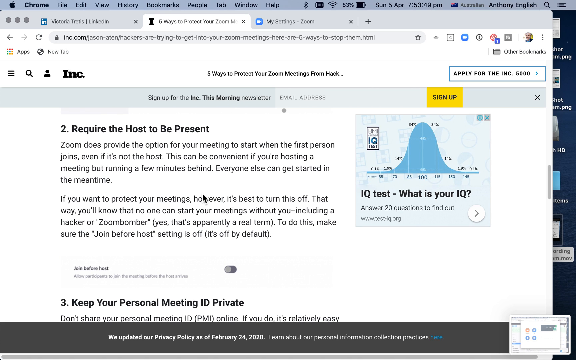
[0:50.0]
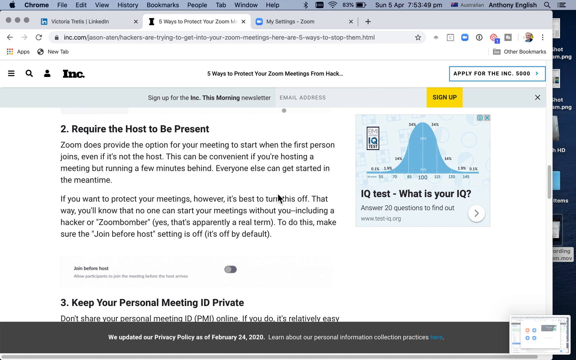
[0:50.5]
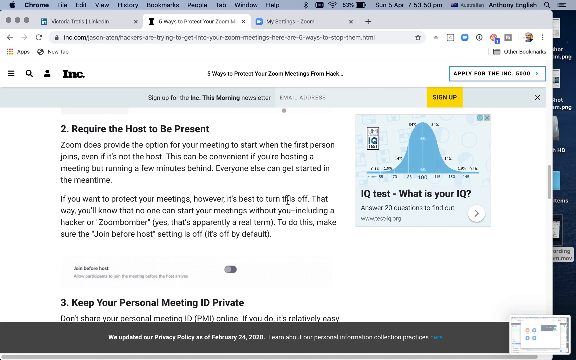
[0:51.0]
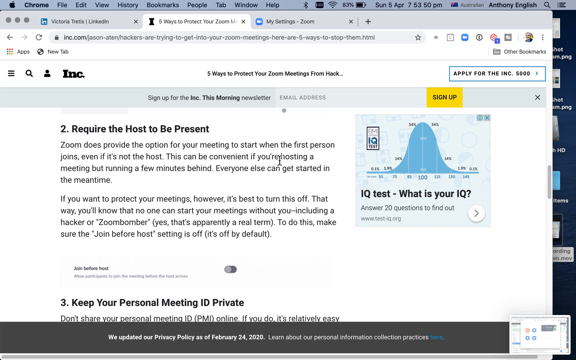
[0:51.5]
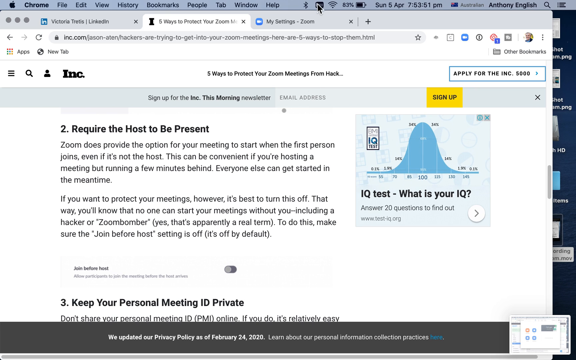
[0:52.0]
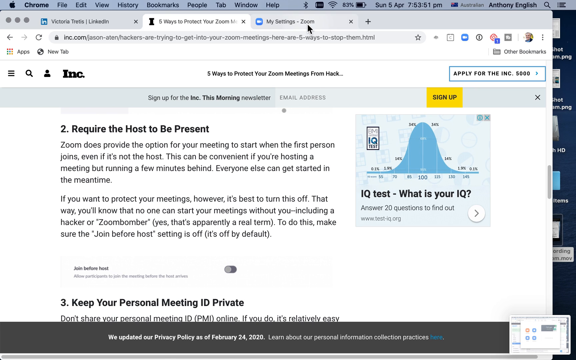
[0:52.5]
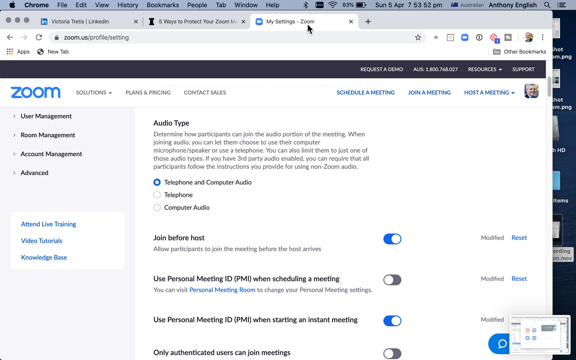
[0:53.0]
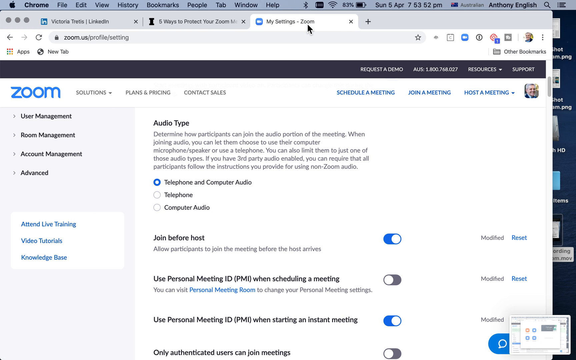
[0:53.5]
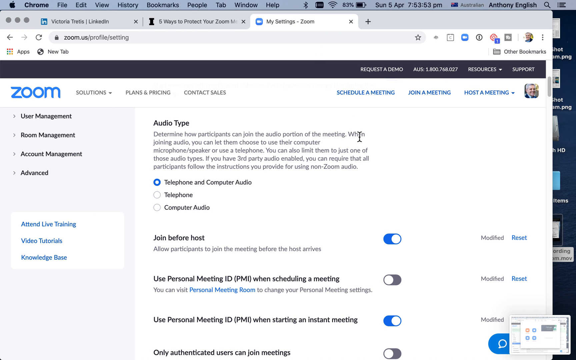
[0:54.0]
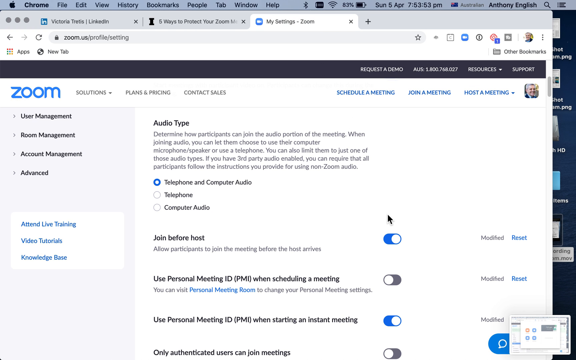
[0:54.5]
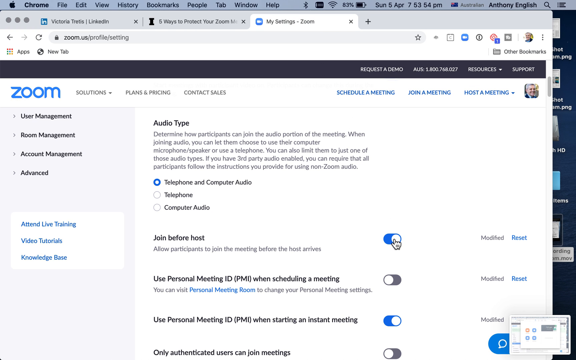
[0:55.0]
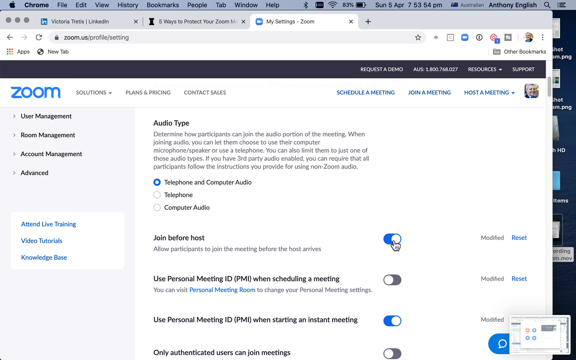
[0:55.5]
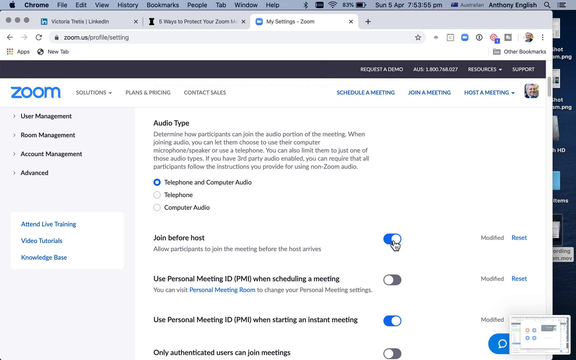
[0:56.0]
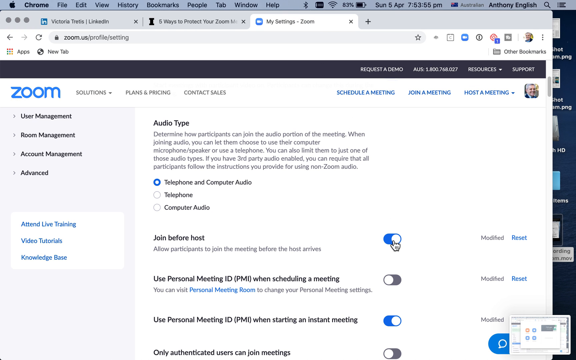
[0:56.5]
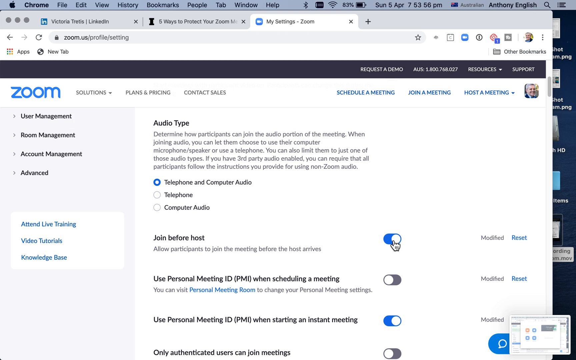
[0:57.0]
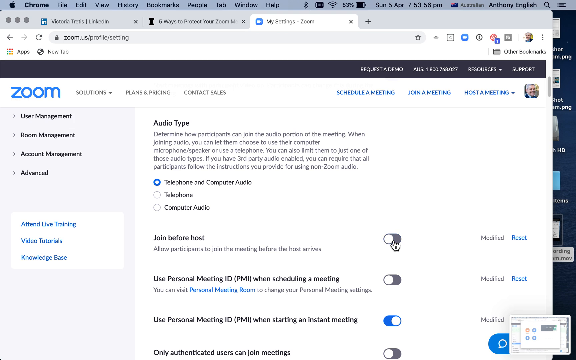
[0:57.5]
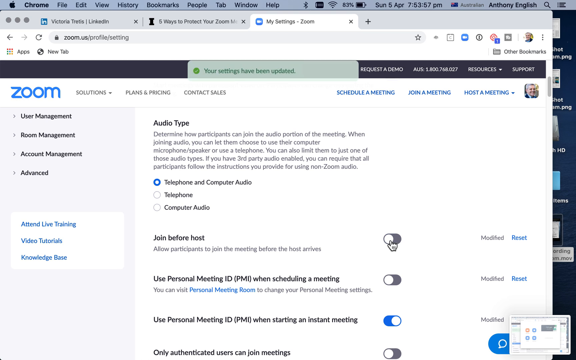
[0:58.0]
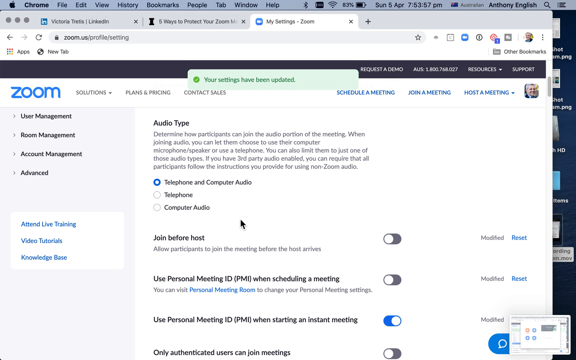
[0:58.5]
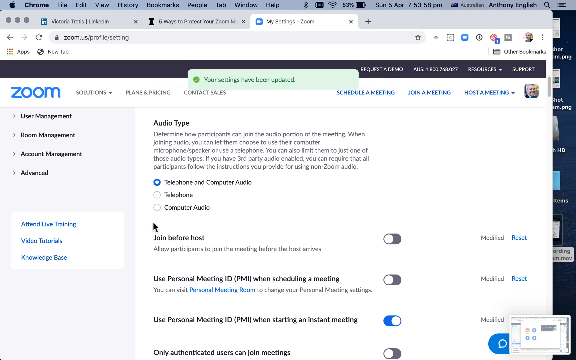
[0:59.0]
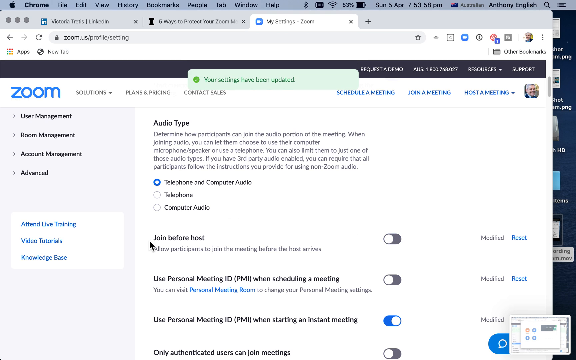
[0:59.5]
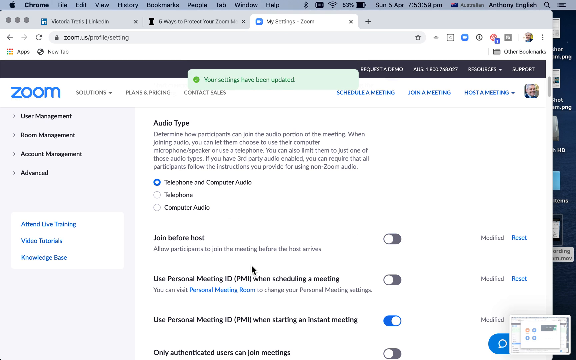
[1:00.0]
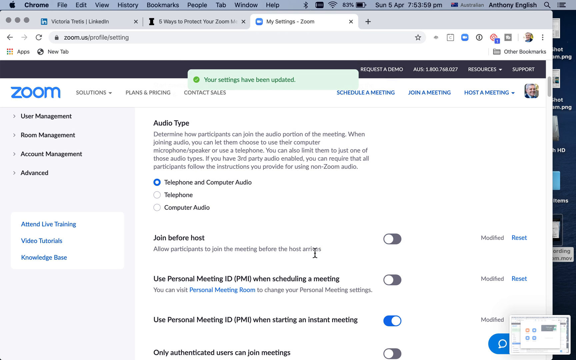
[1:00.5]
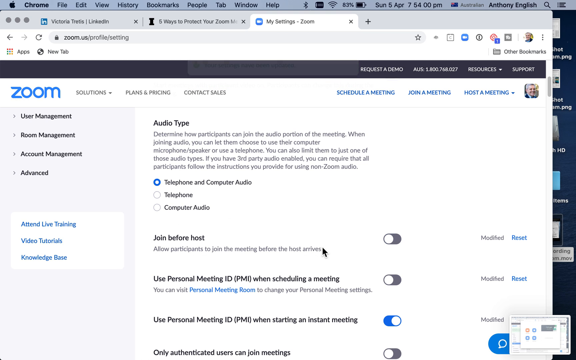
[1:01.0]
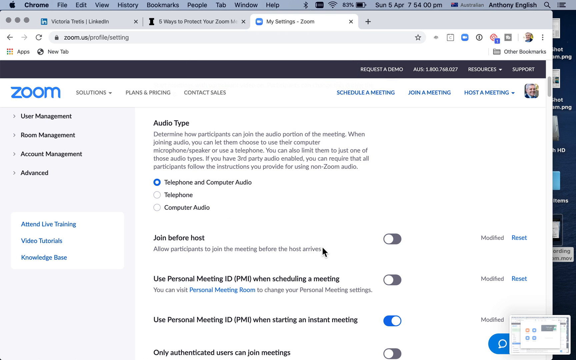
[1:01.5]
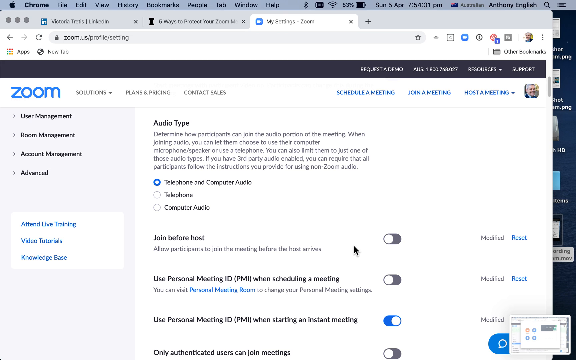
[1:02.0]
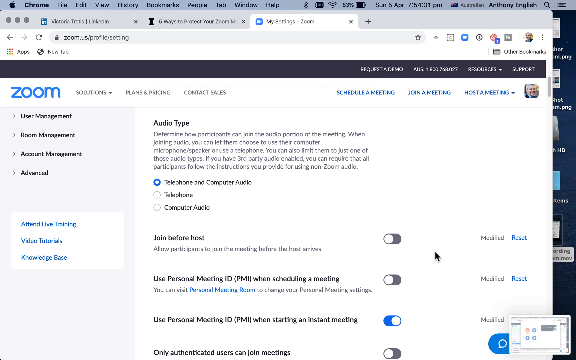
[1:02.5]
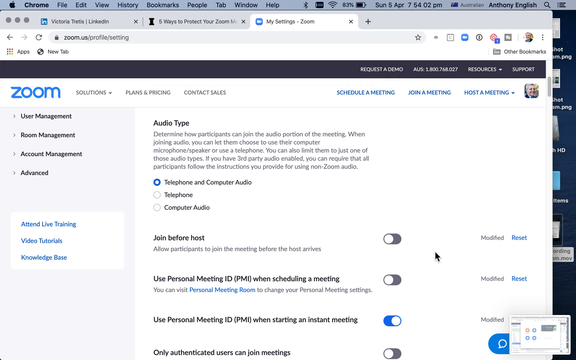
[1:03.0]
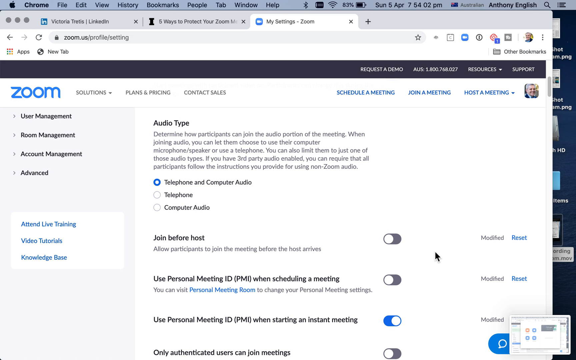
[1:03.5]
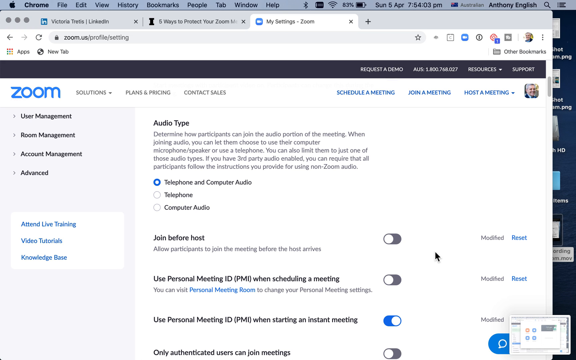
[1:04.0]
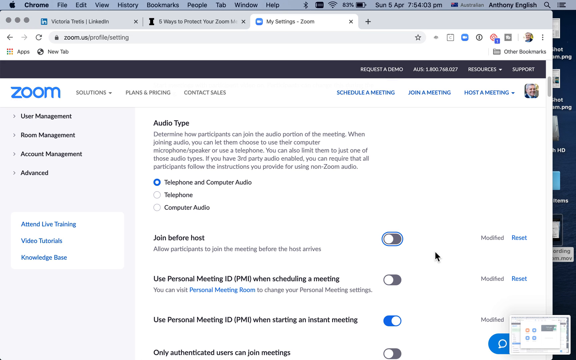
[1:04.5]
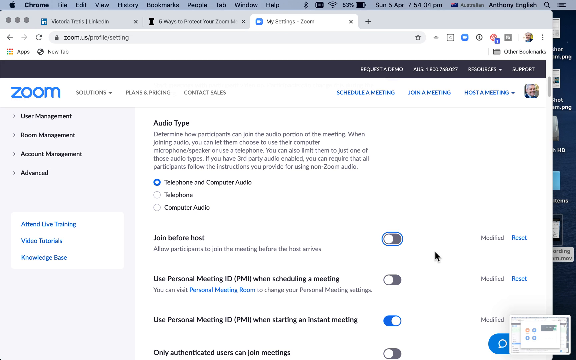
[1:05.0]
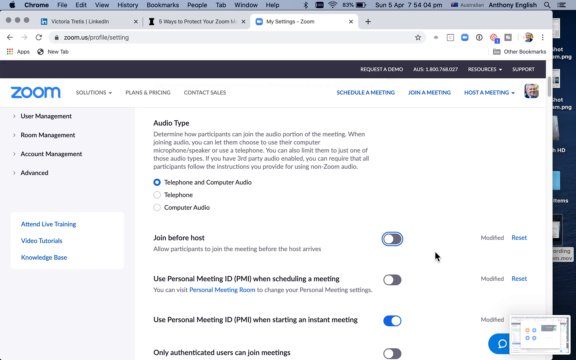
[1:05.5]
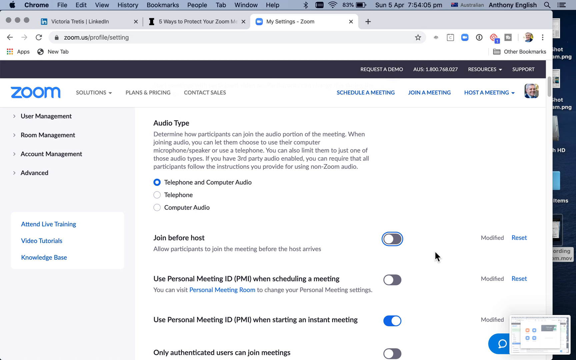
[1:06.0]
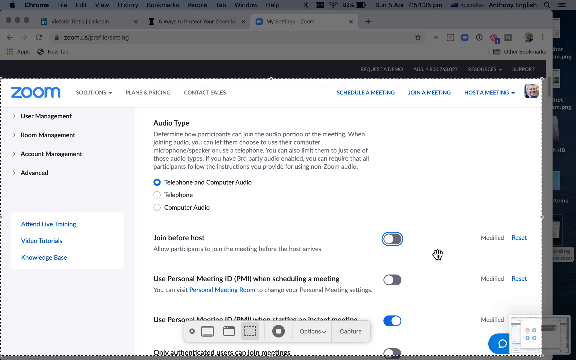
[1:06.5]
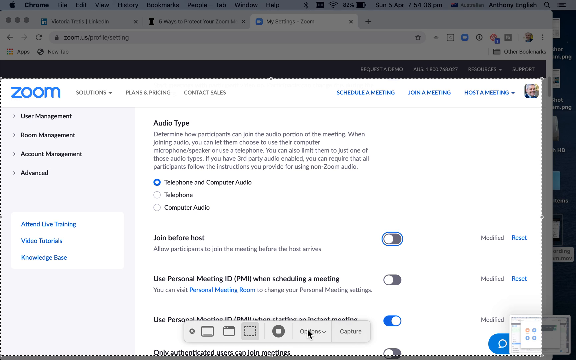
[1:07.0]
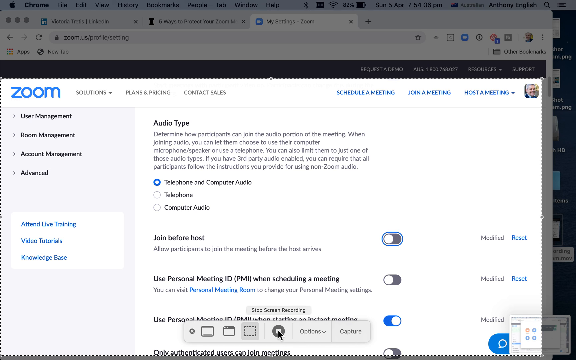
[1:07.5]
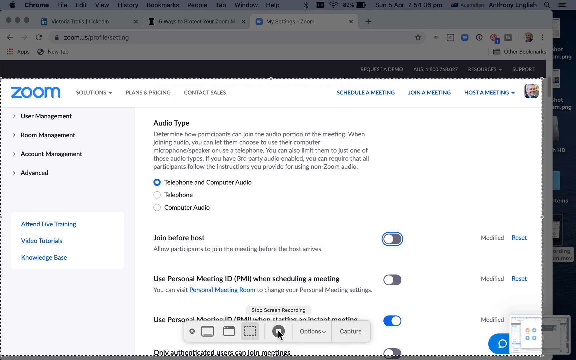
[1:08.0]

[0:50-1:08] A diagram is on screen. She goes to Settings and then to Zoom, ticks to open the file, takes a screenshot and scrolls down. She ticks an item and marks it as complete, and ticks to open the camera to go into Zoom. A diagram appears, and she scrolls down to show what is further down. No people, kids, animals, grass or trees are visible; there is just a computer and what is on its screen.